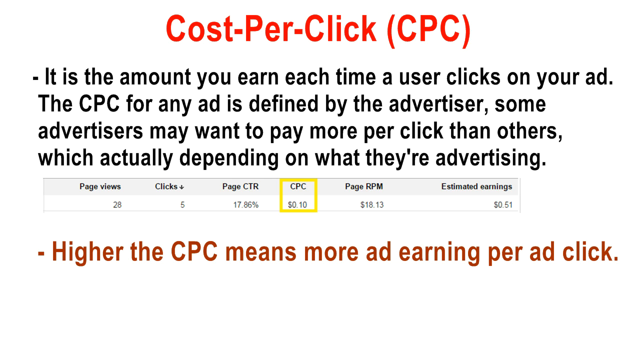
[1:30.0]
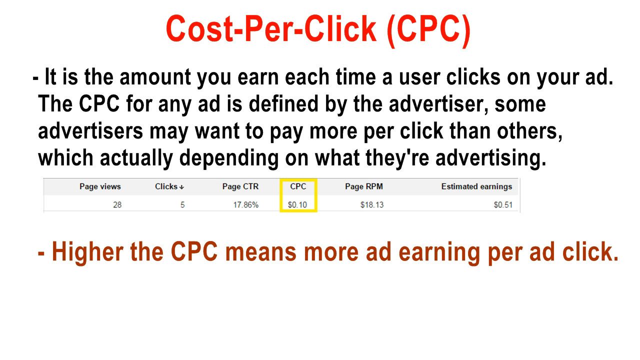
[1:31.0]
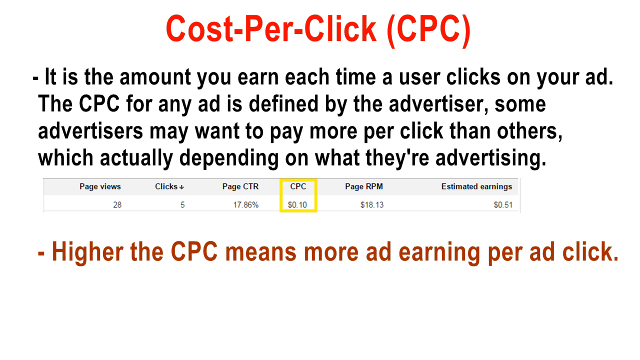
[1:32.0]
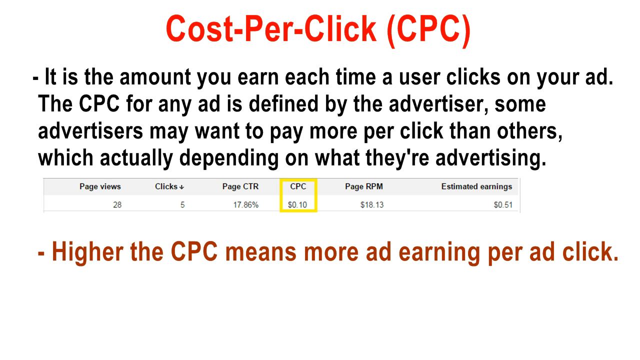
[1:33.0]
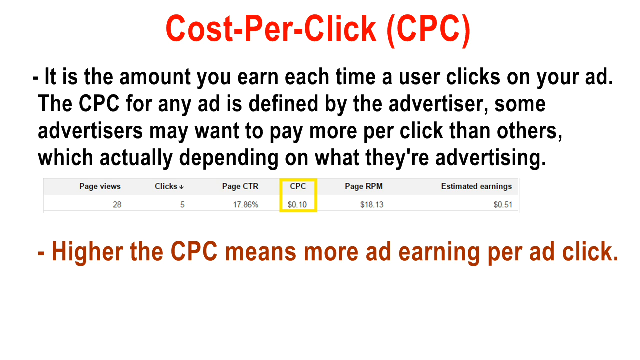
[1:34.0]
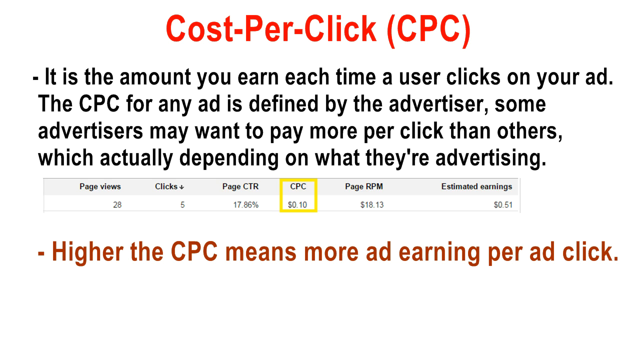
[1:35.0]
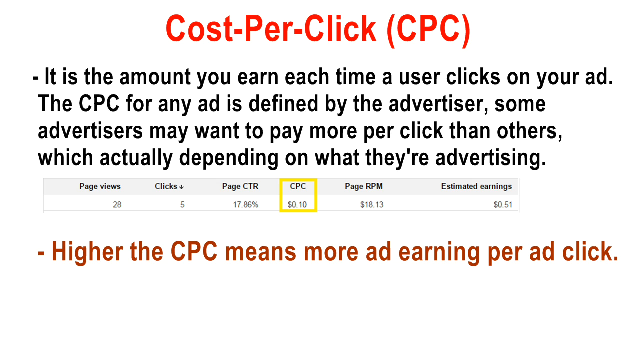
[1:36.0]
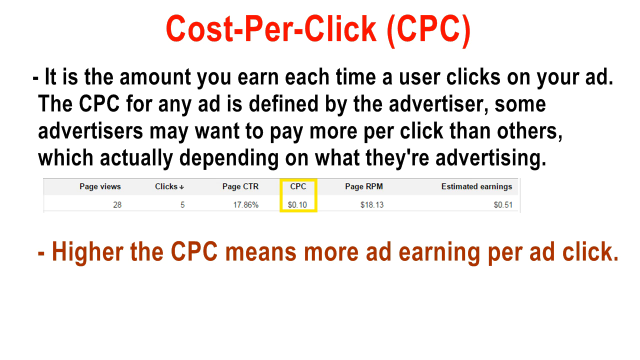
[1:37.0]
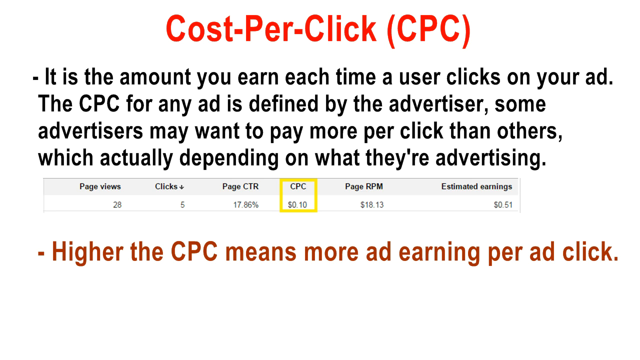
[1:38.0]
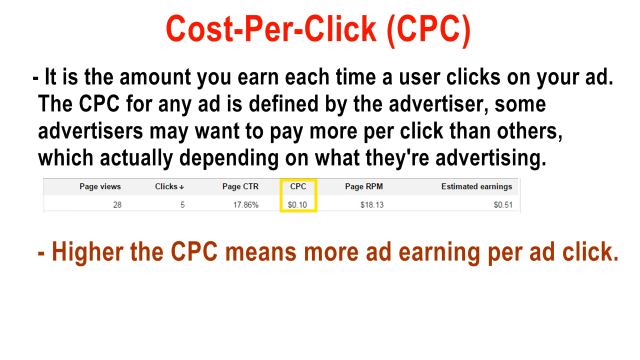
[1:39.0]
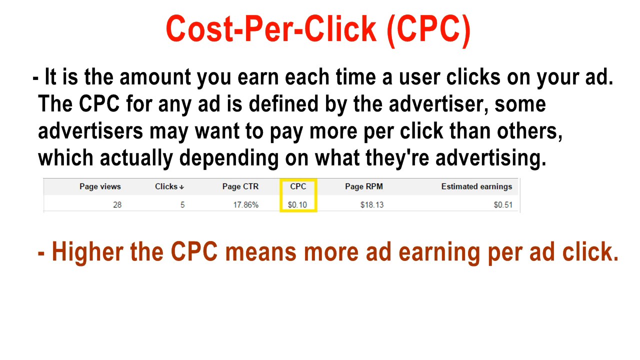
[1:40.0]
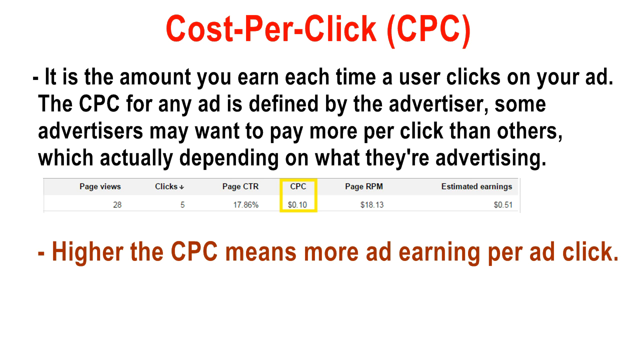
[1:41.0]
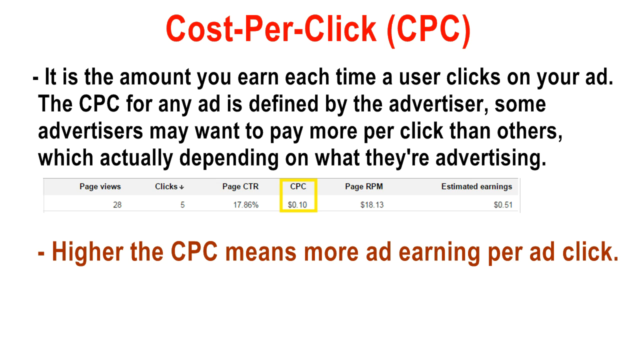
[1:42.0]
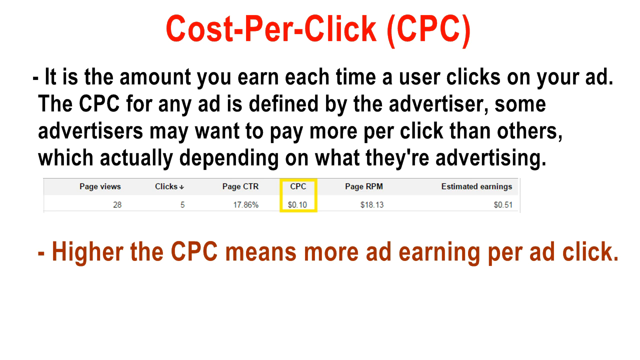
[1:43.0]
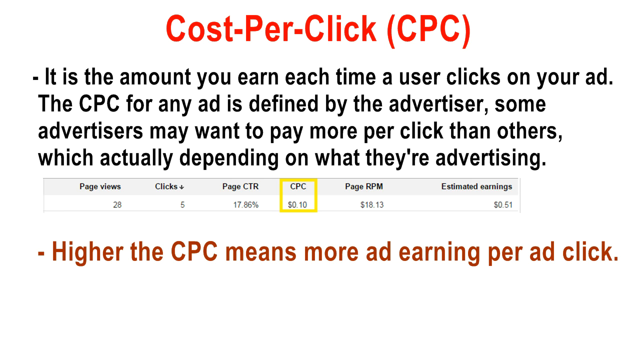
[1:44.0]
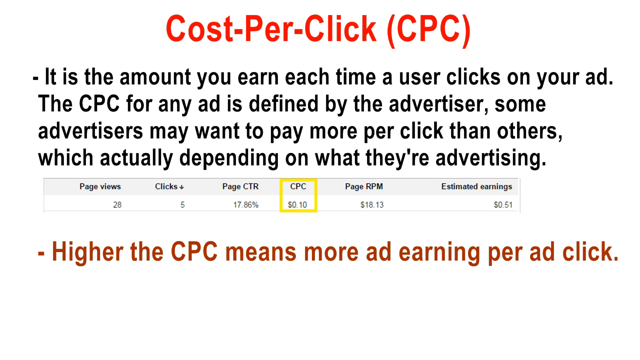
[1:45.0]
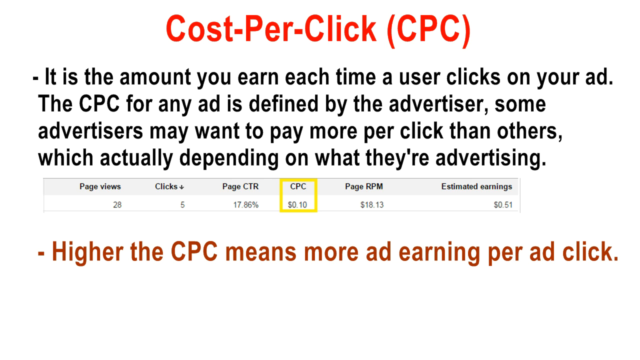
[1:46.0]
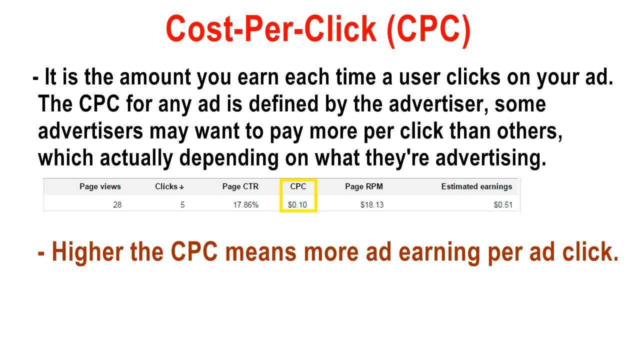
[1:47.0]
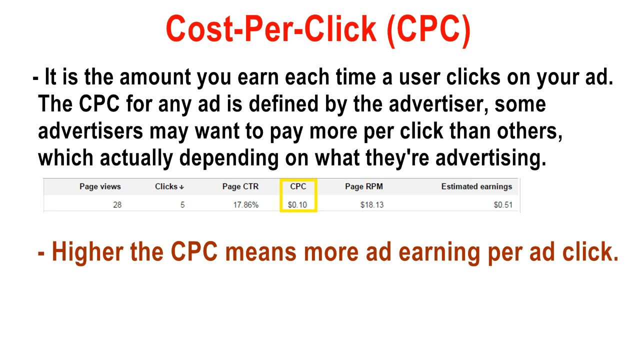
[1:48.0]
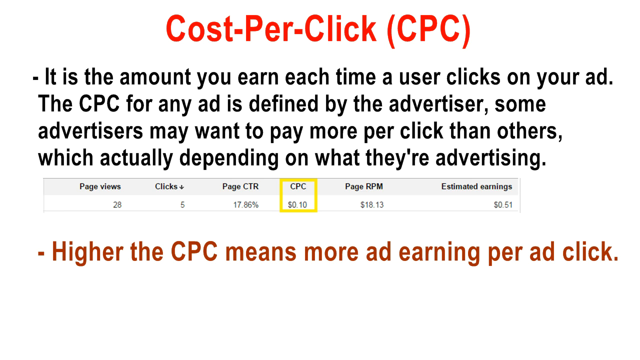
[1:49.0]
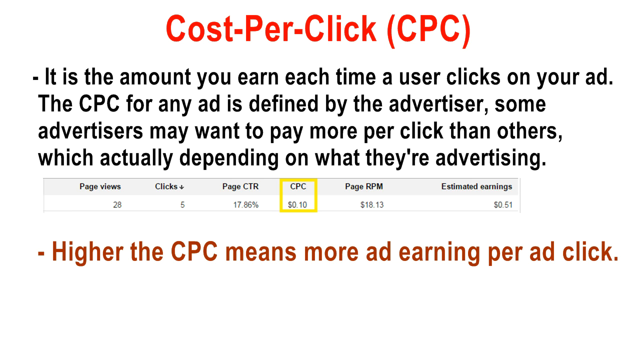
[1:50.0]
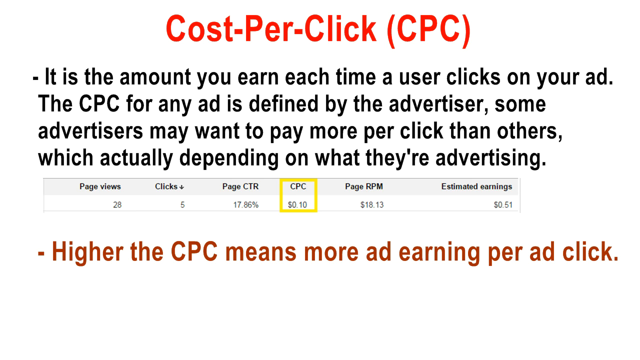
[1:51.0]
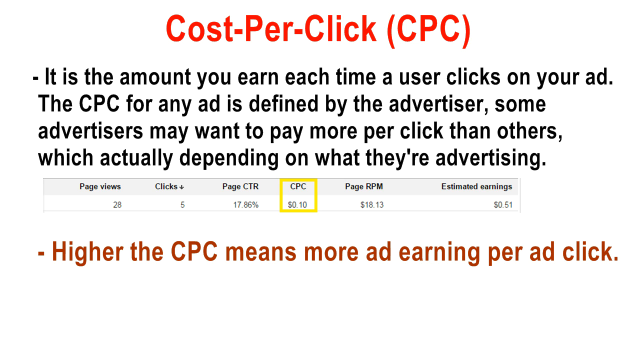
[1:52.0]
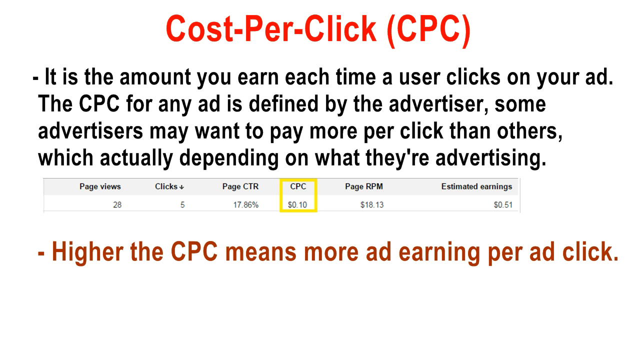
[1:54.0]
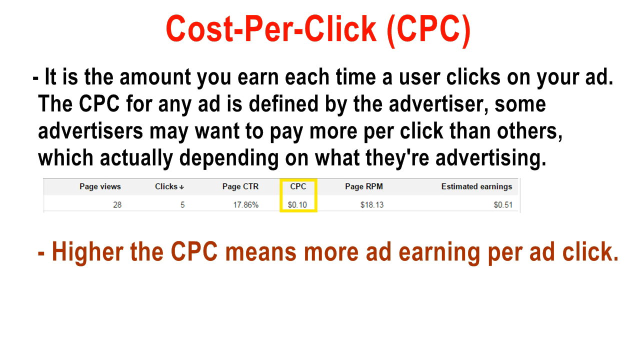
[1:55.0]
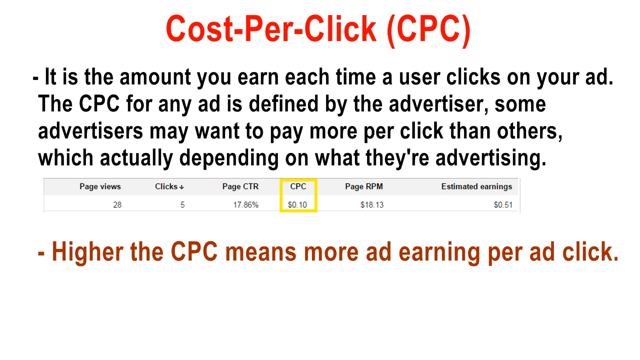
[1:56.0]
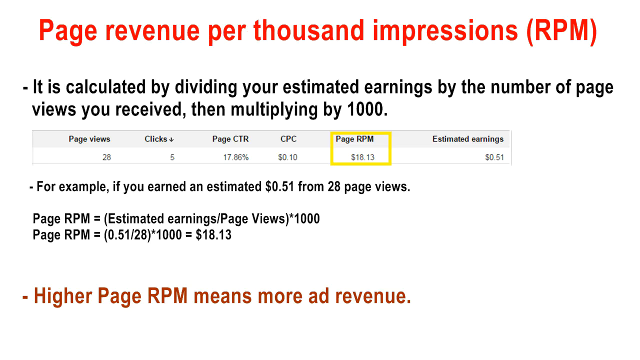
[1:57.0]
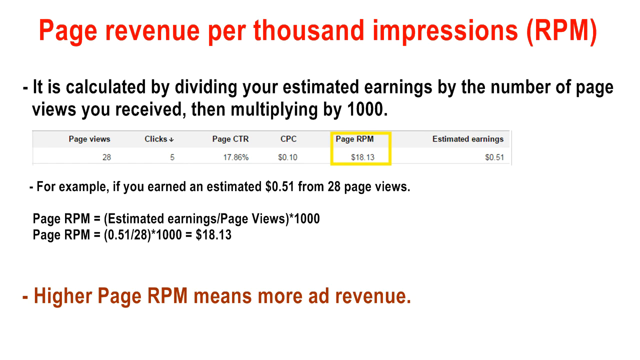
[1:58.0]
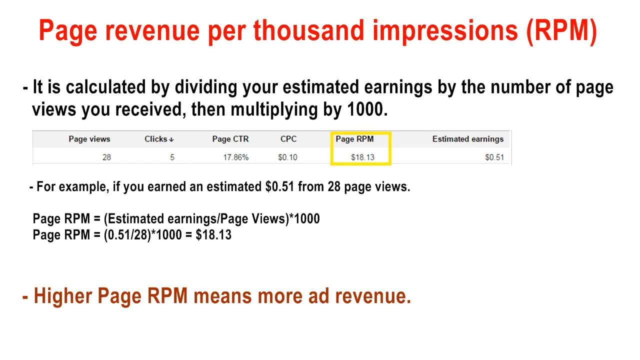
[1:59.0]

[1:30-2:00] The cost-per-click (CPC) page continues, with red lettering on a white background and the statement that a higher CPC means more ad earning per click. The screen slowly changes to the next one, headed in red letters "Page revenue per thousand impressions (RPM)". It explains that this is calculated by dividing estimated earnings by the number of page views received, then multiplying by 1000, and that a higher page RPM means more ad revenue.